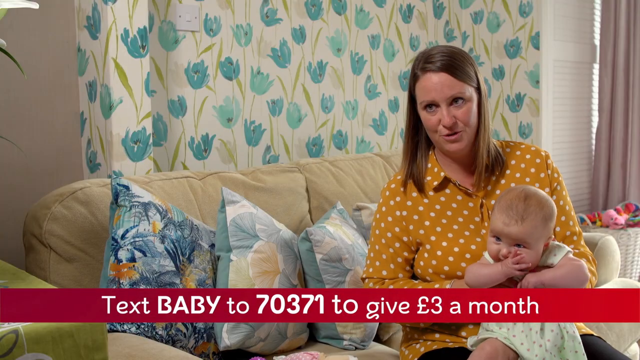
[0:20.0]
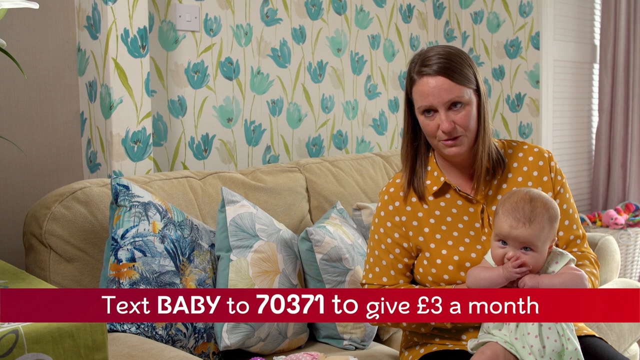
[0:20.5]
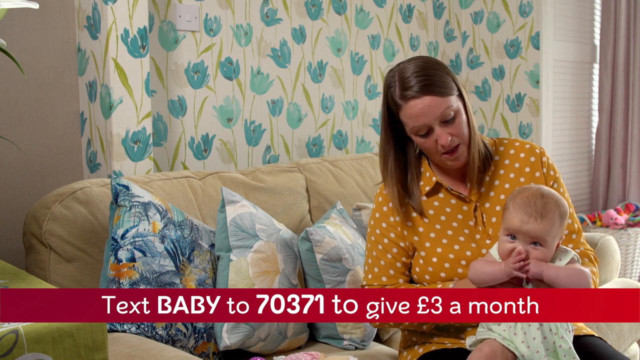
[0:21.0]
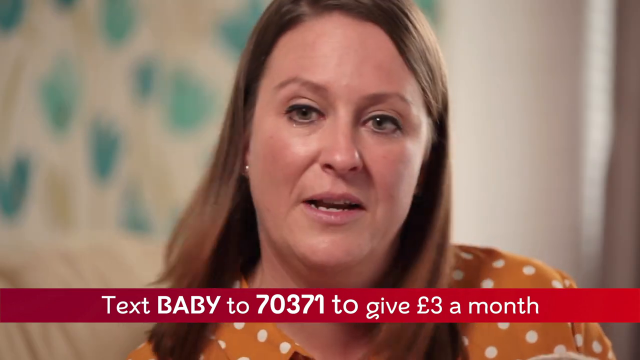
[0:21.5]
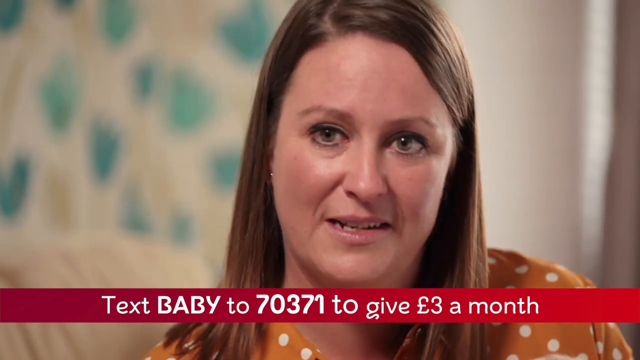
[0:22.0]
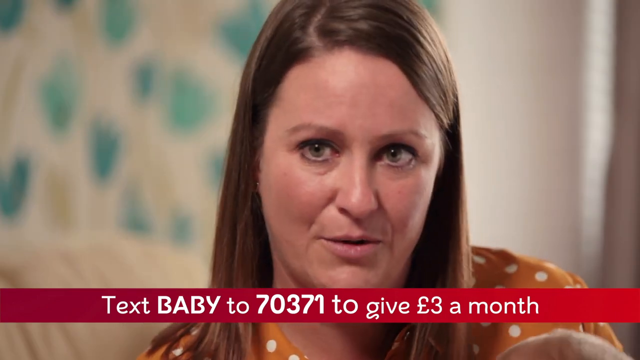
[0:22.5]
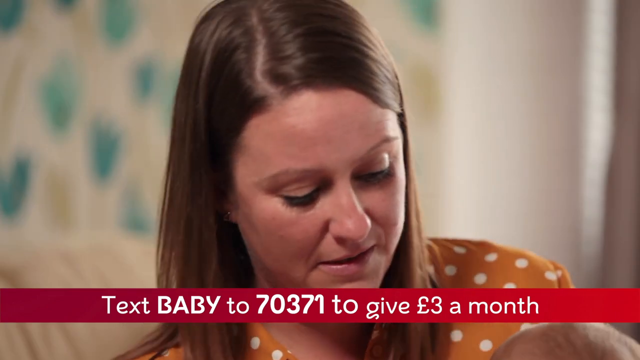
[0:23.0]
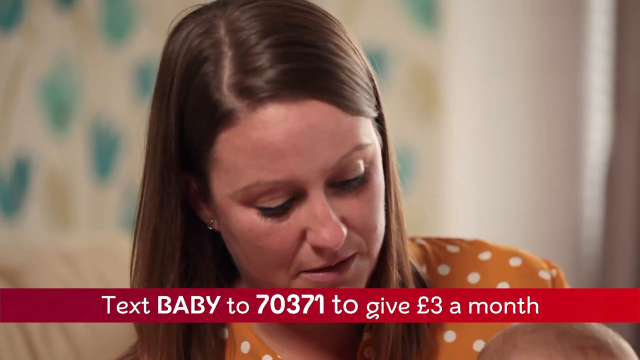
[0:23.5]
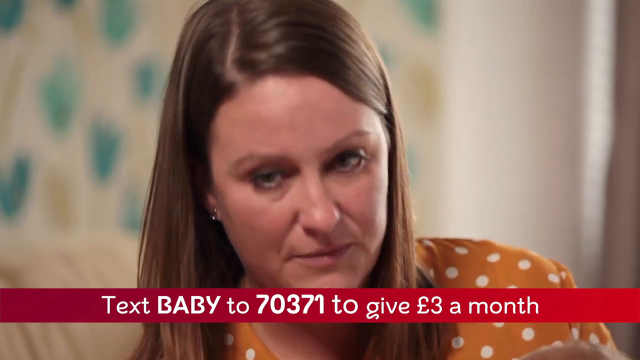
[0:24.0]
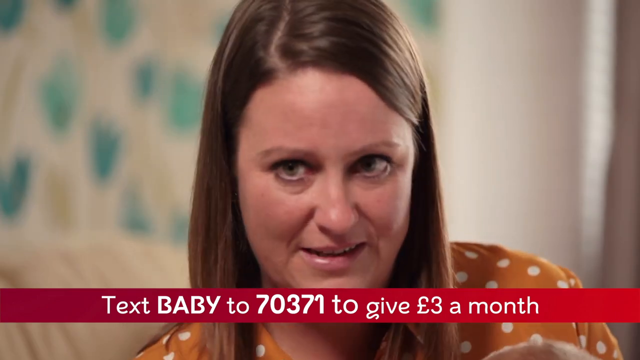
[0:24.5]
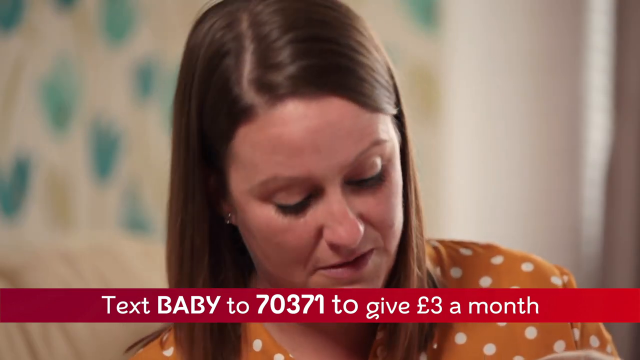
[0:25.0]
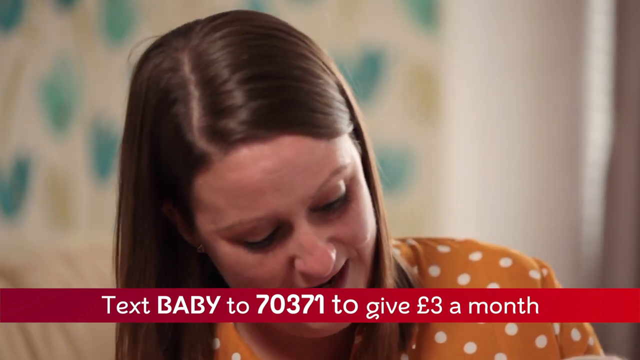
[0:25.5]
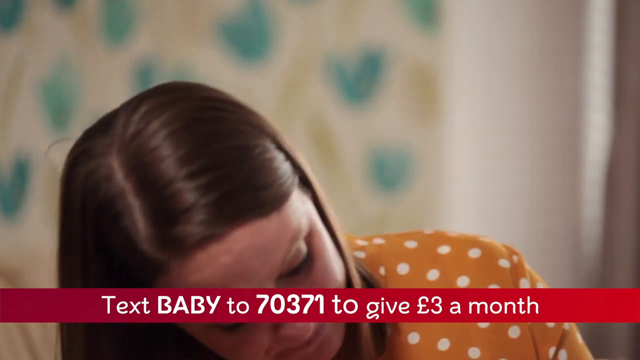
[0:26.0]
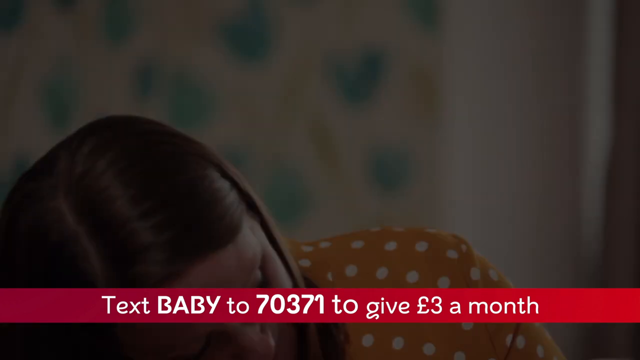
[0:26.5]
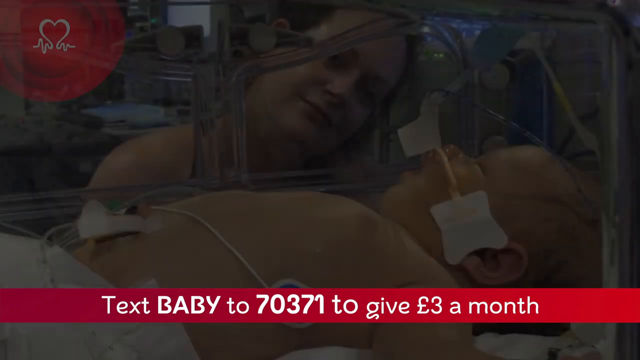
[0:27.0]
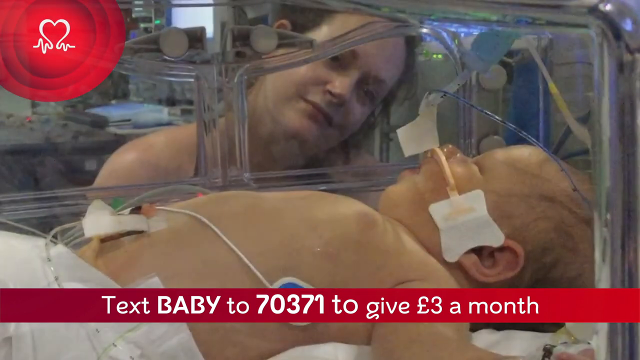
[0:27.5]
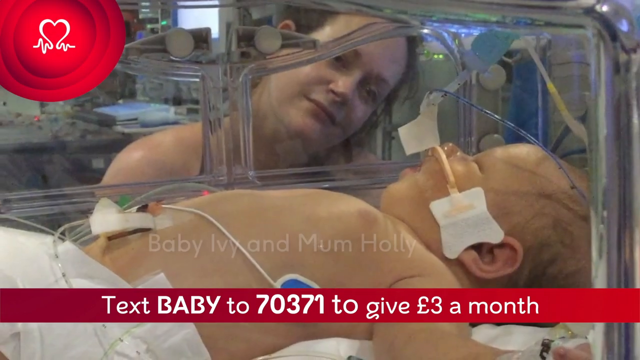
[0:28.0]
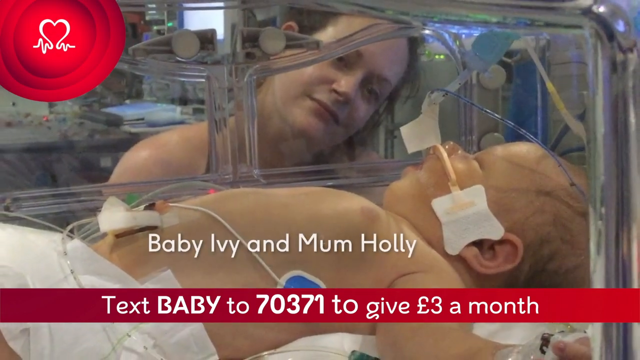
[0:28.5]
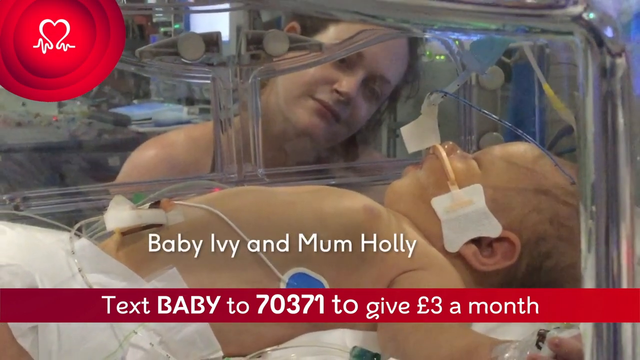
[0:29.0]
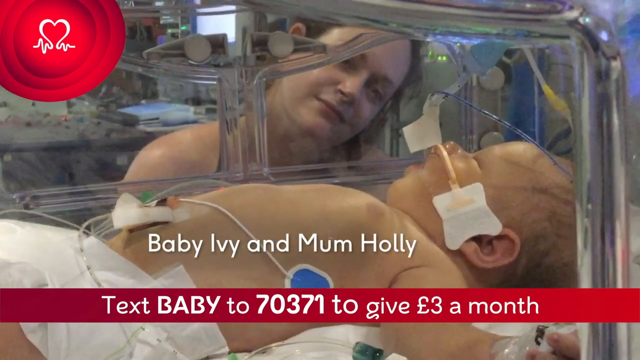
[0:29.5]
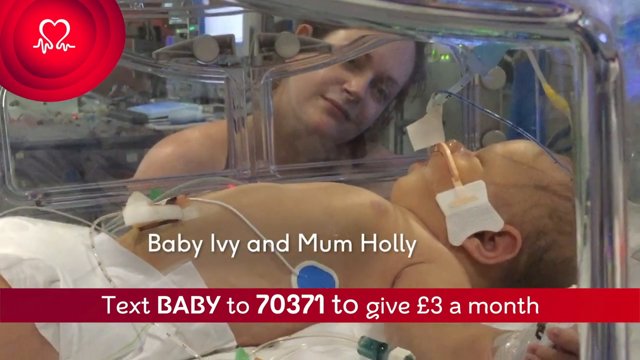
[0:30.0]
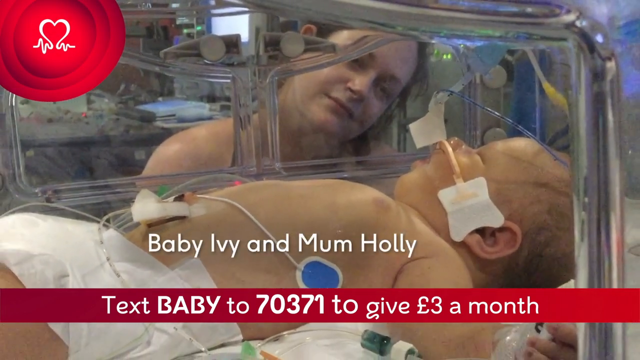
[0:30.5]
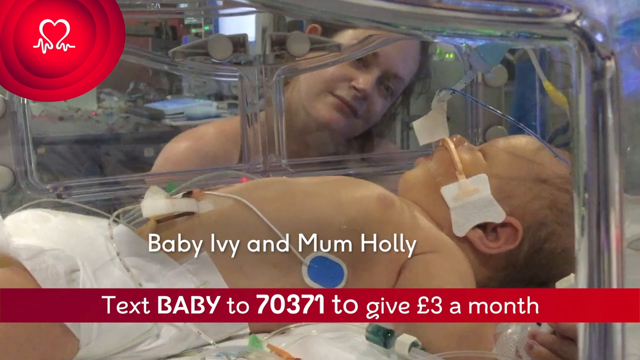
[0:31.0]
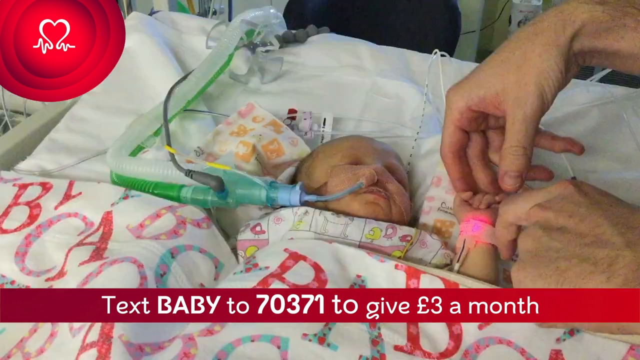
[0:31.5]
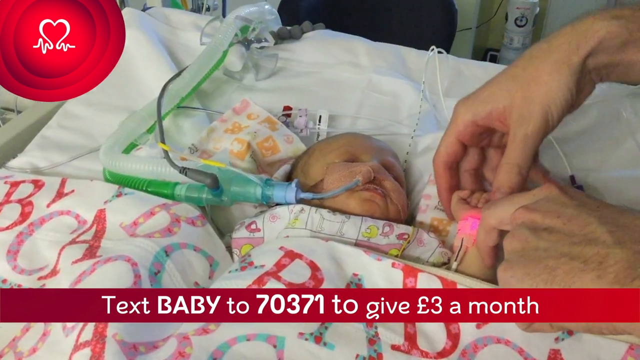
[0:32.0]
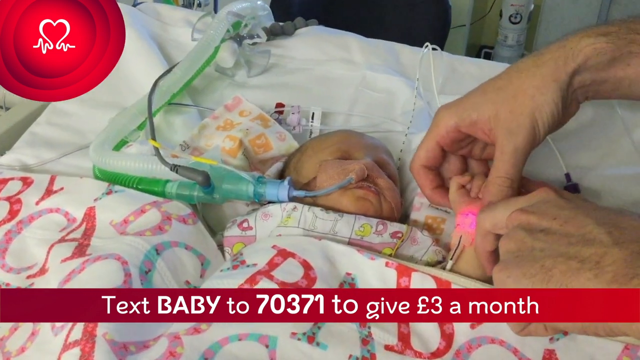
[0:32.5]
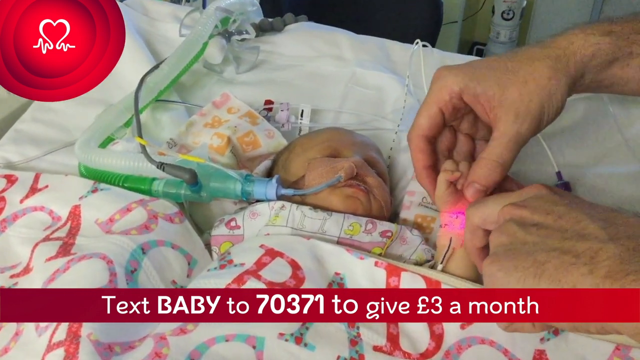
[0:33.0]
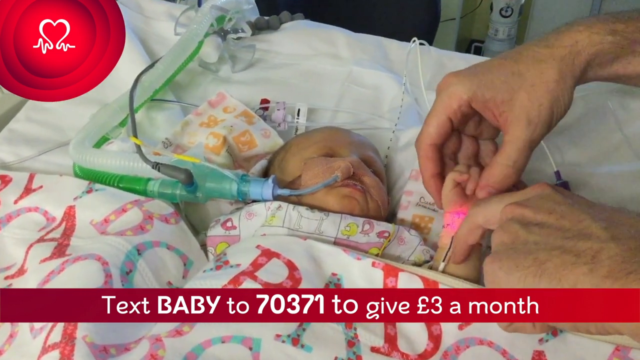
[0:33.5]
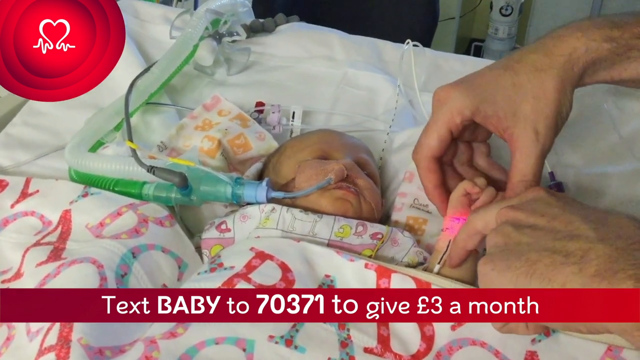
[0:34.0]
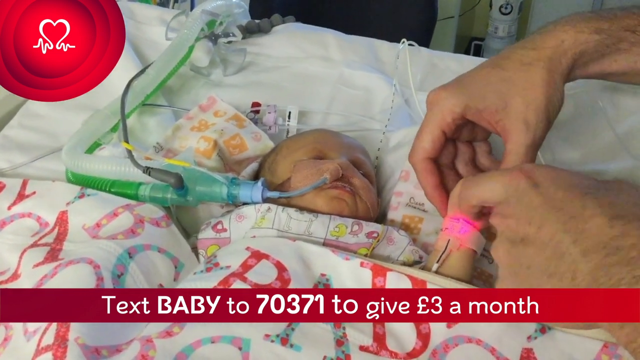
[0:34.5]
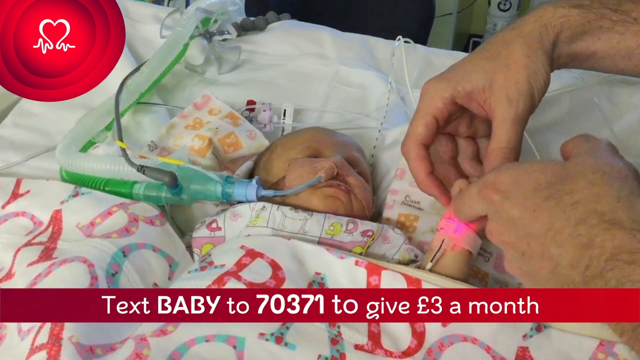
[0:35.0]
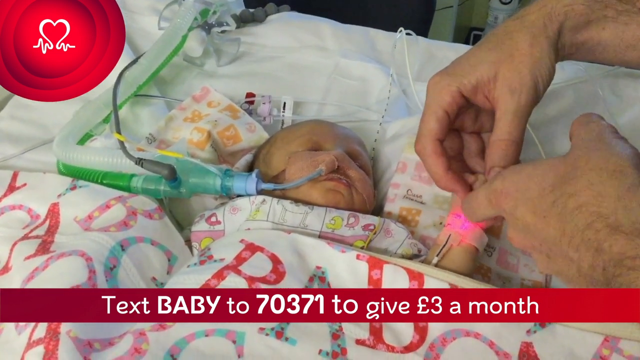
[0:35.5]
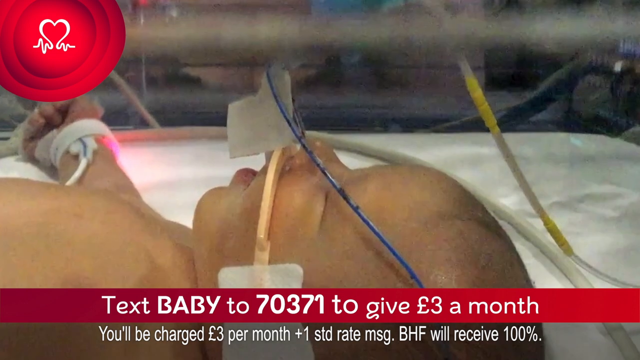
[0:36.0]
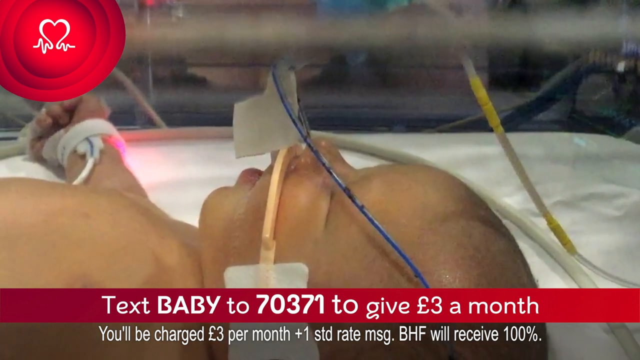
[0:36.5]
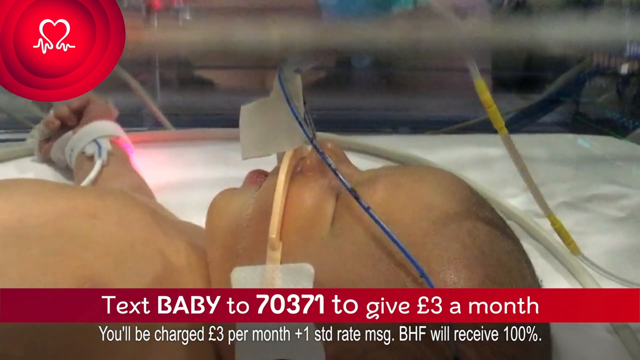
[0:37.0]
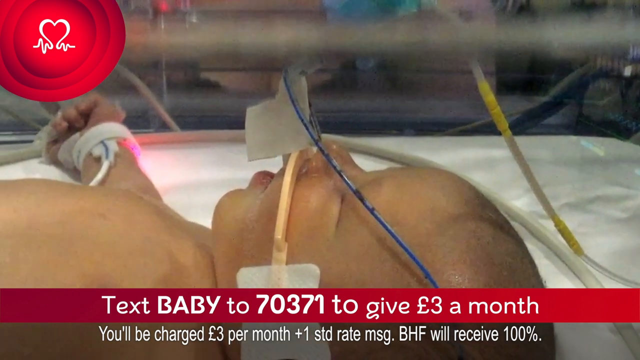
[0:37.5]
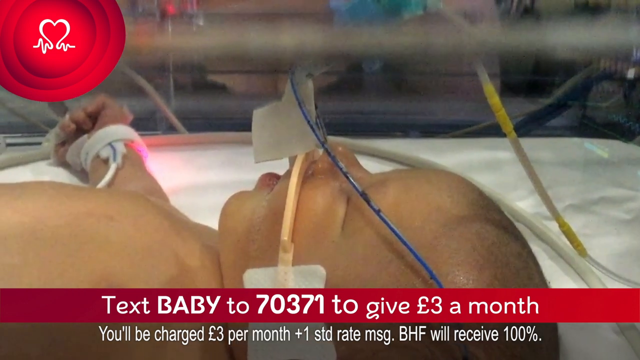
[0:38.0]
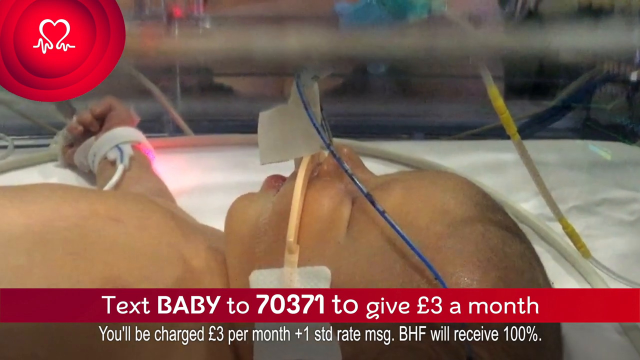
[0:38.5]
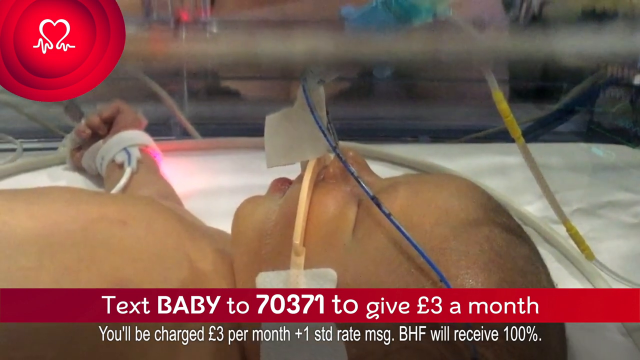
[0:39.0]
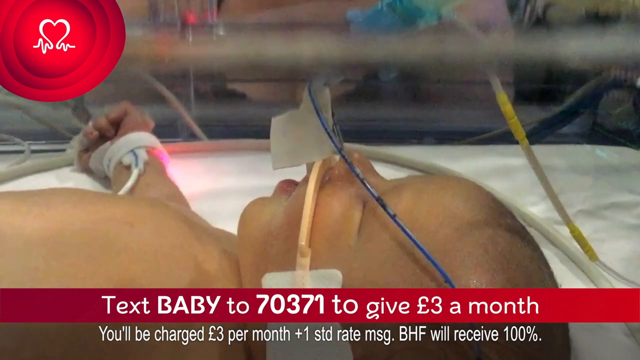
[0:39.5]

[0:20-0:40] Videos and images show babies in need of heart surgery. First, a woman sits on a light-colored sofa, holding a baby on her lap. She has light brown, shoulder-length hair and wears a yellow blouse with white polka dots; behind her are curtains that look like blue tulips with pale green leaves on a white background. A red text bar across the bottom of the screen reads "Text BABY to 70371 to give £3 a month." The camera zooms in to the mother, who speaks to someone behind the camera and periodically looks down at the baby. The video switches to another baby in an incubator with tubes in her nose, with a woman looking through the incubator at her. Text across the bottom of the screen reads "Baby Ivy and Mum Holly." Another view shows the baby lying under some blankets as a nurse attaches something to her wrist; she has tubes in her nose. Several more views show this baby in a similar position.